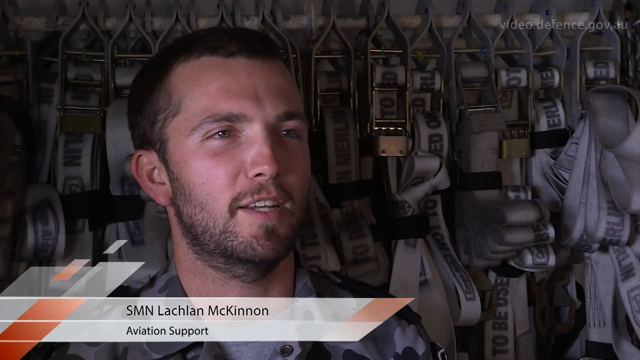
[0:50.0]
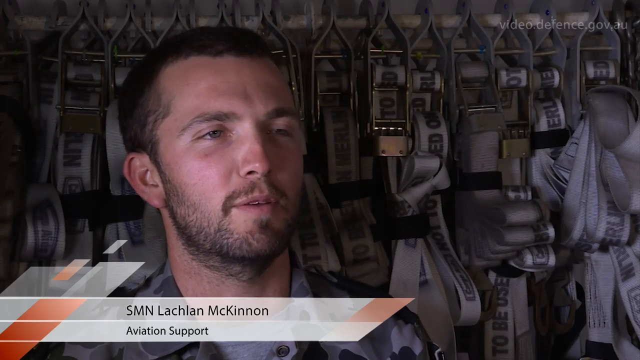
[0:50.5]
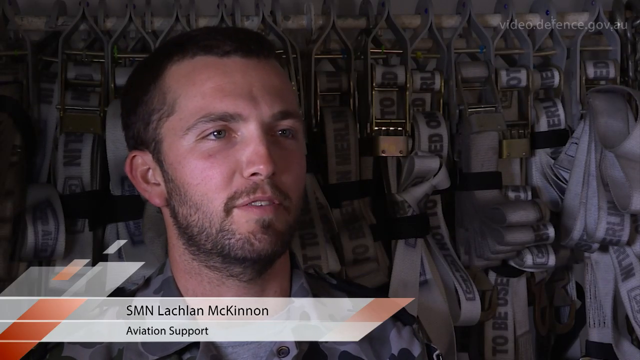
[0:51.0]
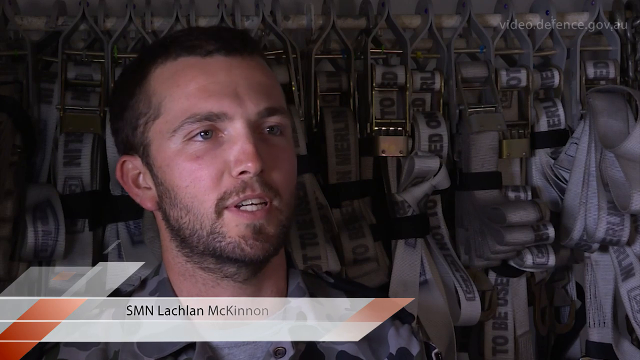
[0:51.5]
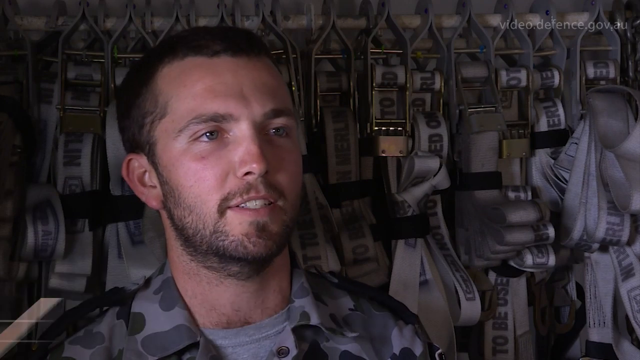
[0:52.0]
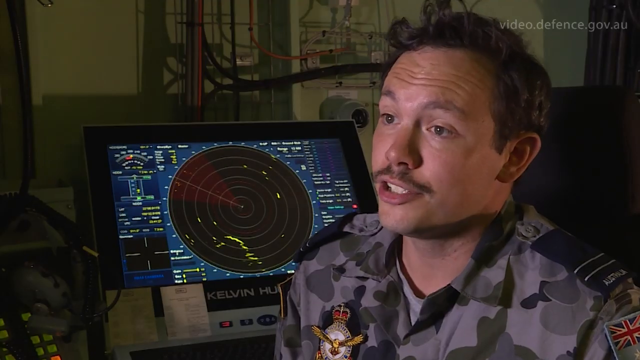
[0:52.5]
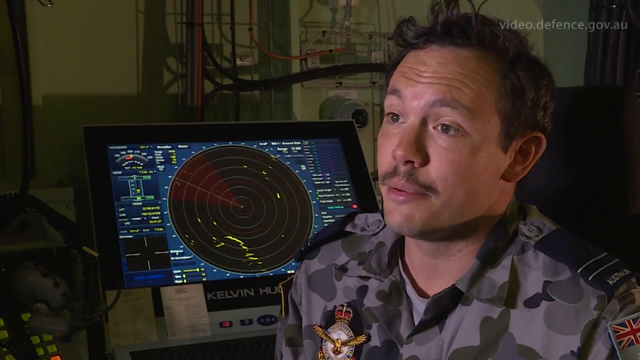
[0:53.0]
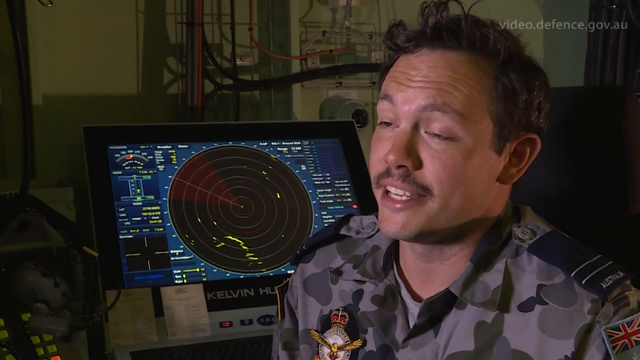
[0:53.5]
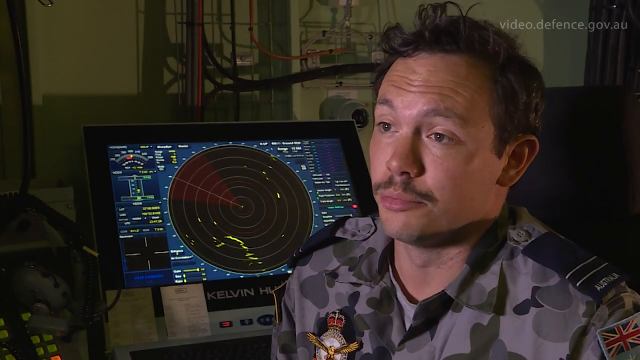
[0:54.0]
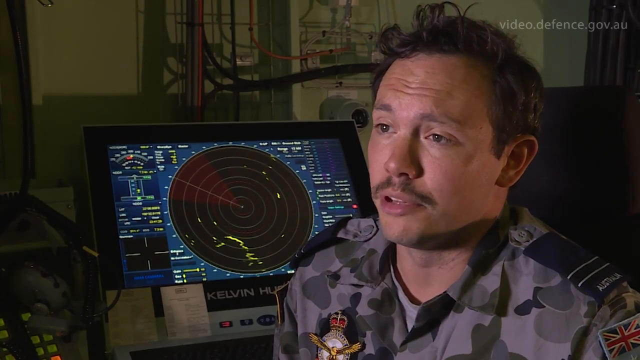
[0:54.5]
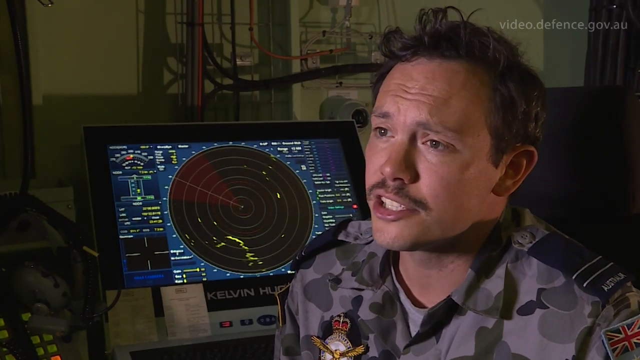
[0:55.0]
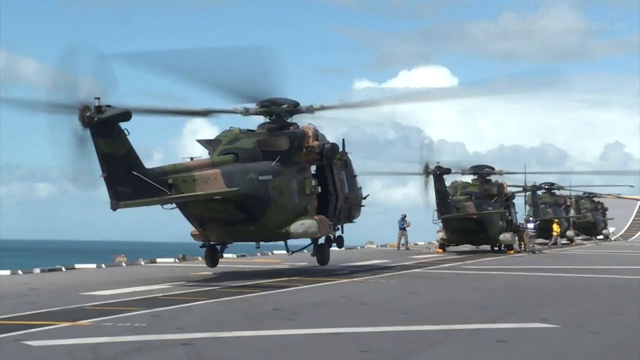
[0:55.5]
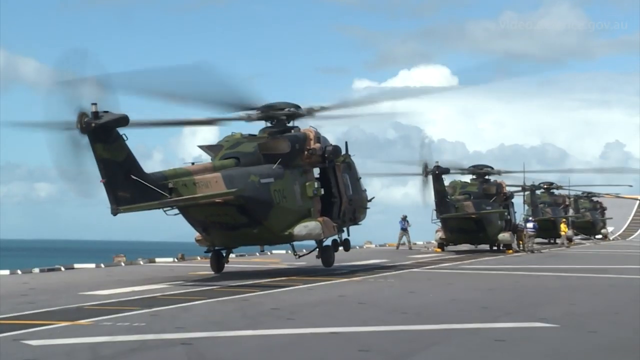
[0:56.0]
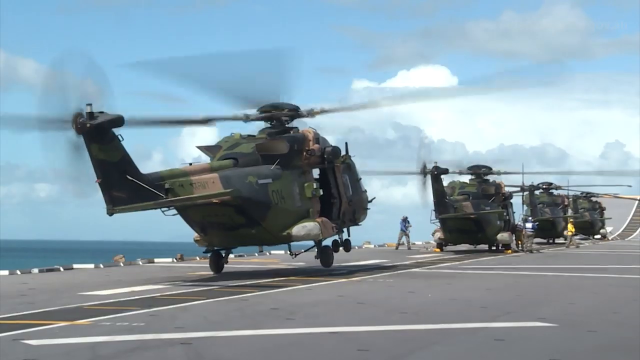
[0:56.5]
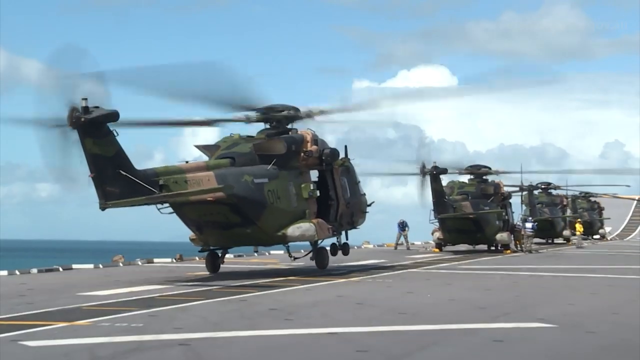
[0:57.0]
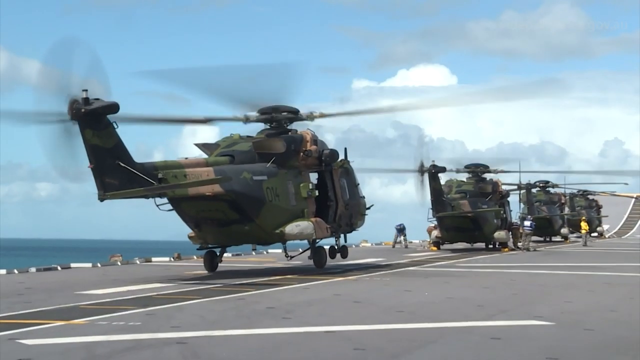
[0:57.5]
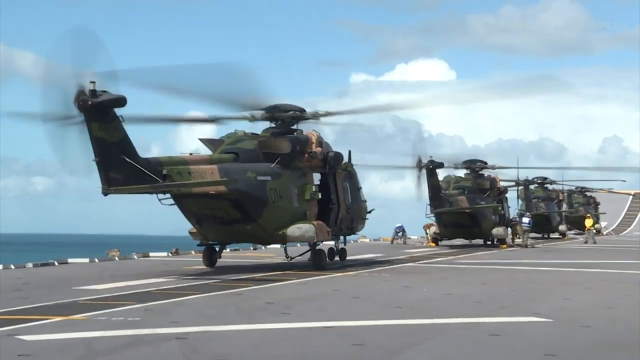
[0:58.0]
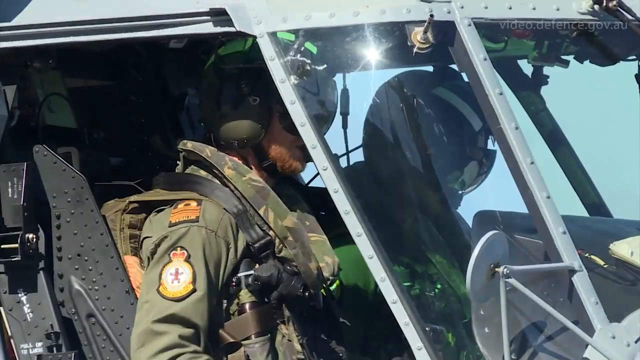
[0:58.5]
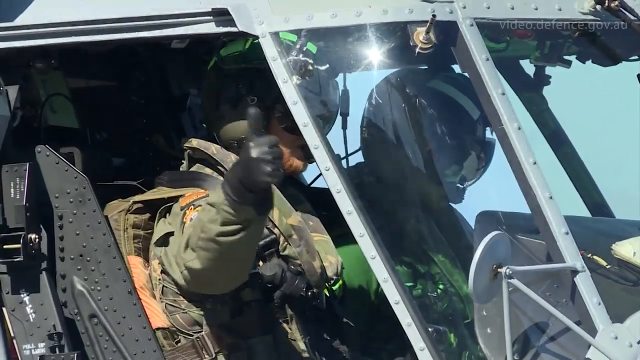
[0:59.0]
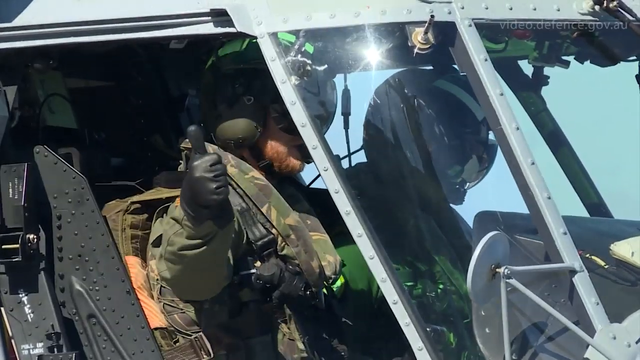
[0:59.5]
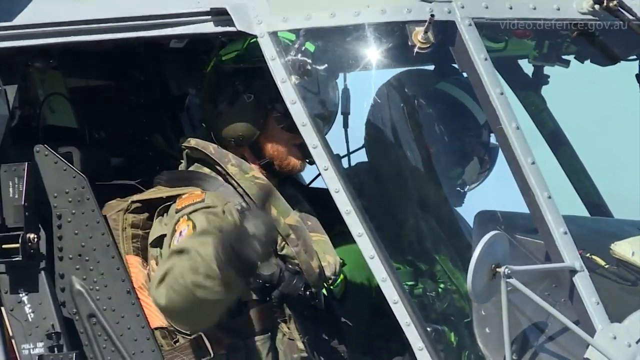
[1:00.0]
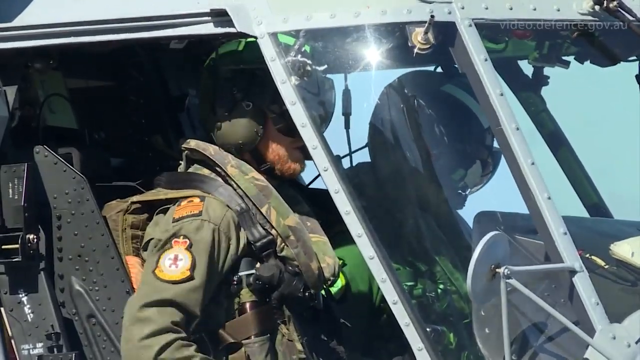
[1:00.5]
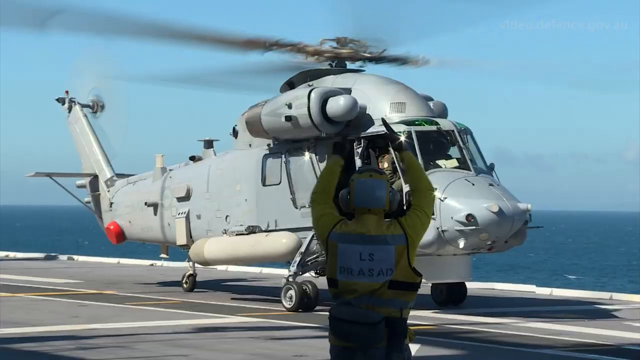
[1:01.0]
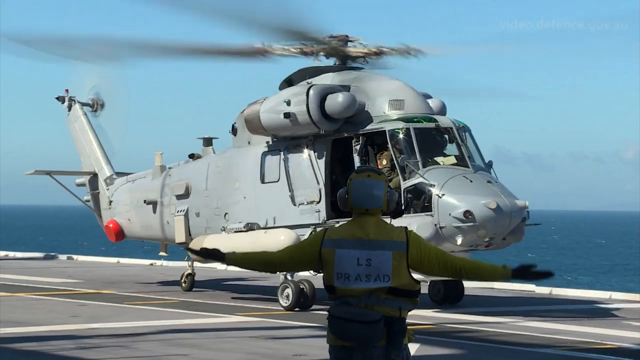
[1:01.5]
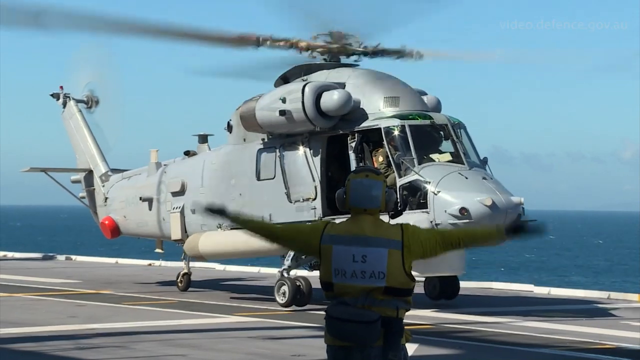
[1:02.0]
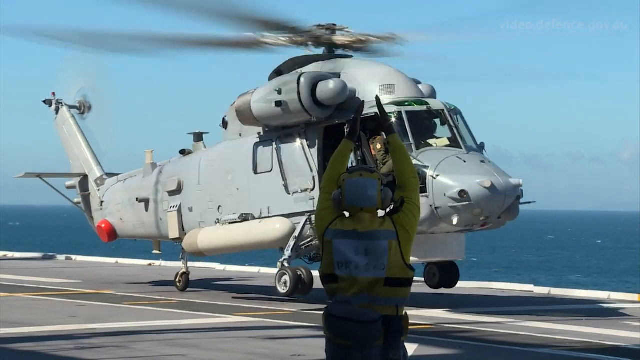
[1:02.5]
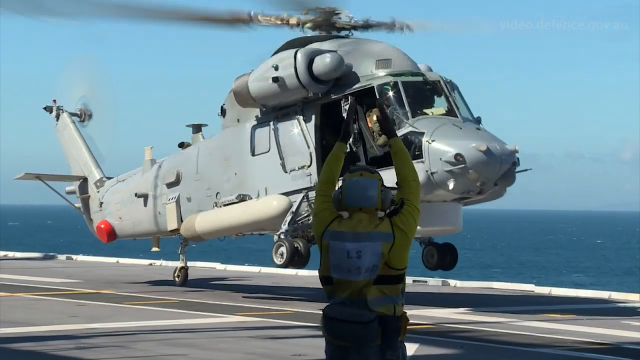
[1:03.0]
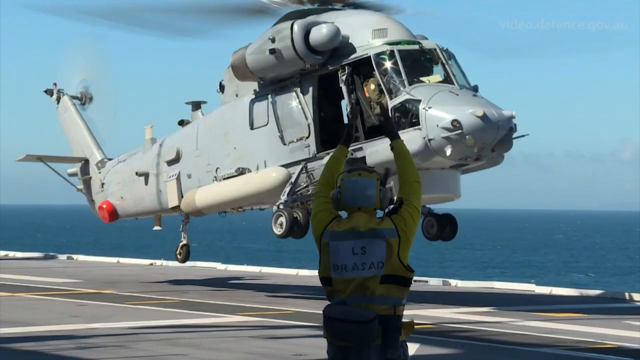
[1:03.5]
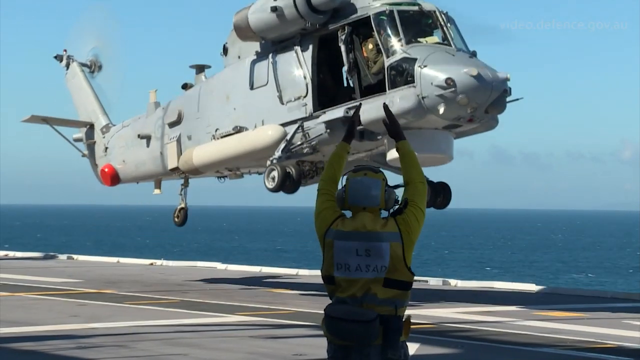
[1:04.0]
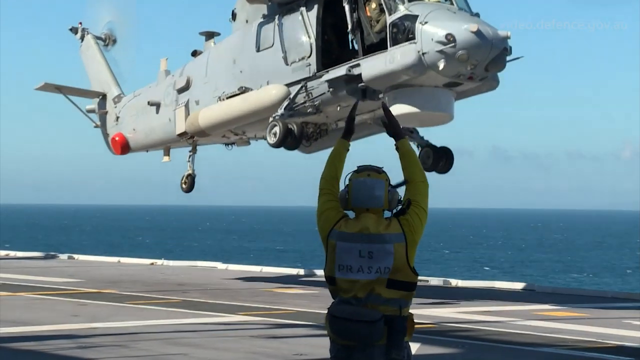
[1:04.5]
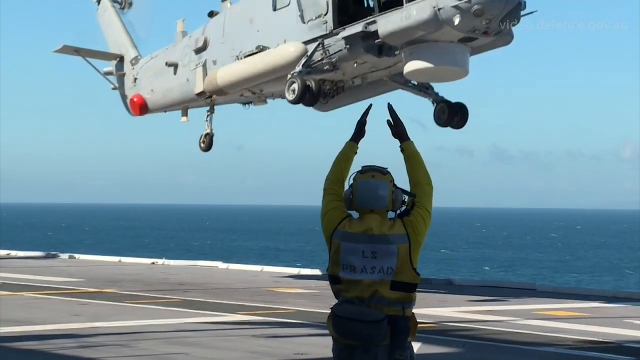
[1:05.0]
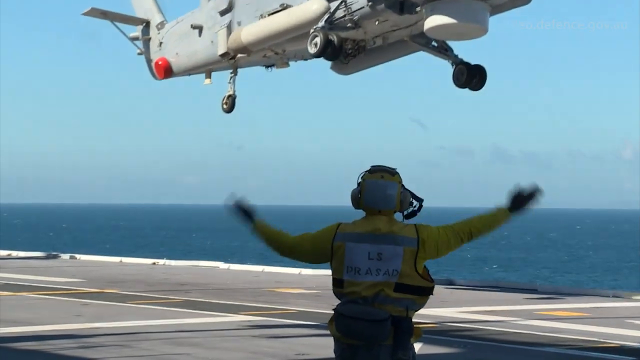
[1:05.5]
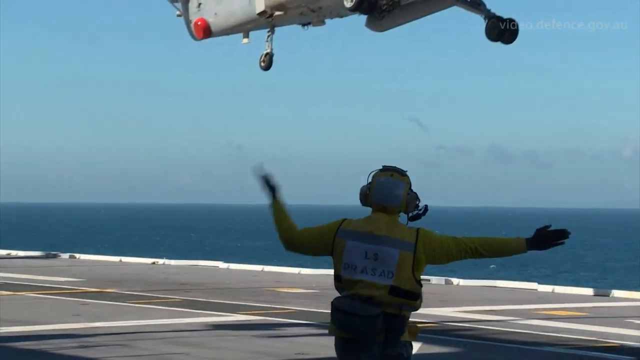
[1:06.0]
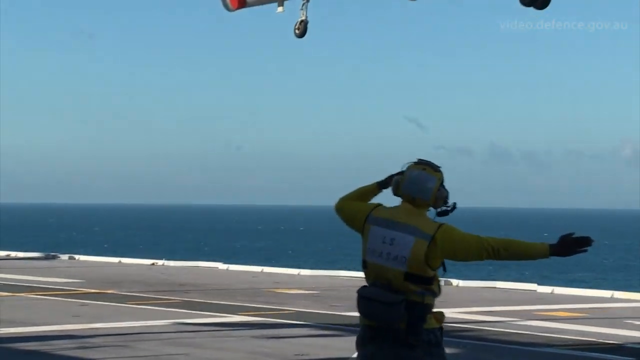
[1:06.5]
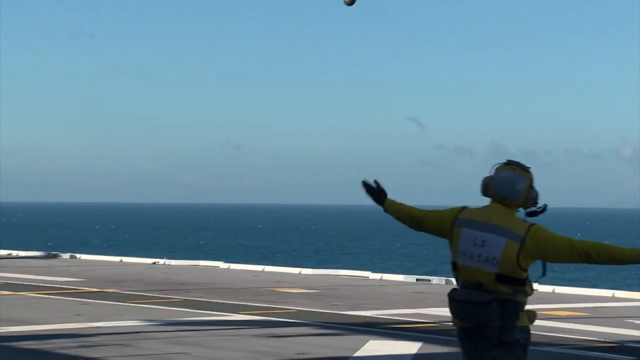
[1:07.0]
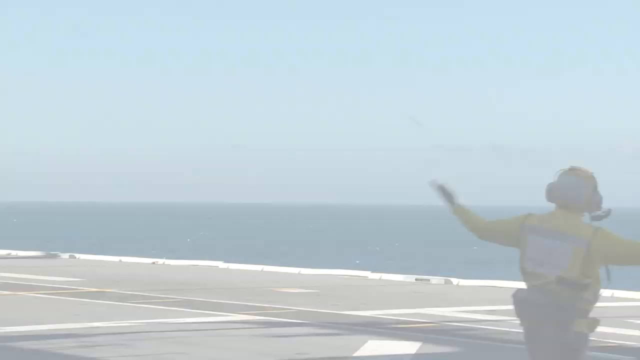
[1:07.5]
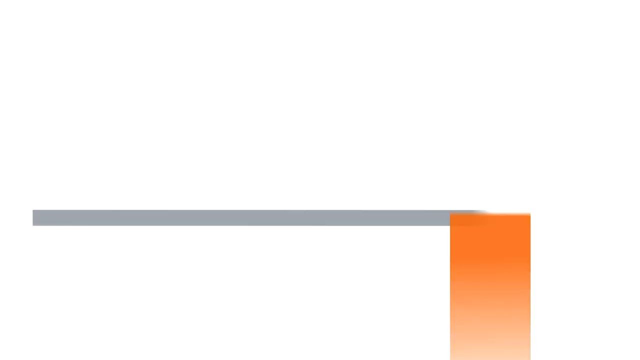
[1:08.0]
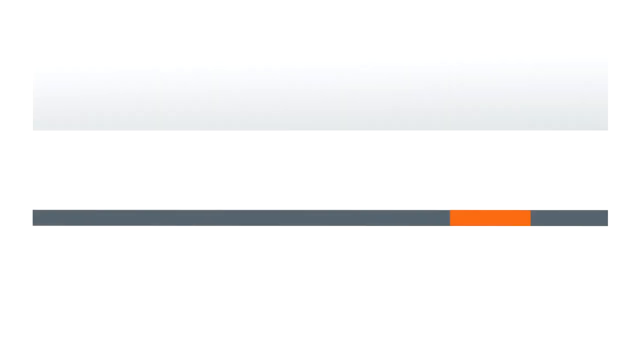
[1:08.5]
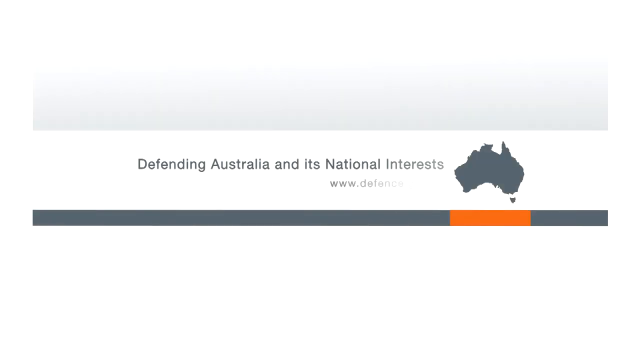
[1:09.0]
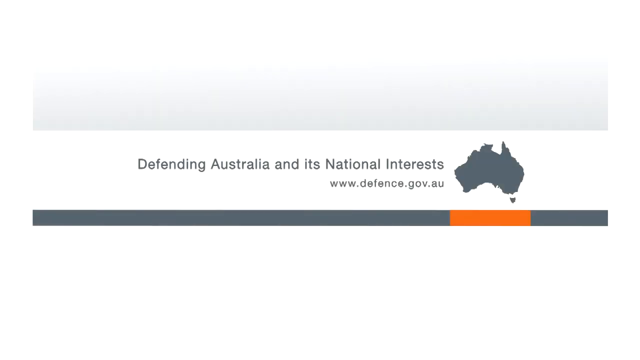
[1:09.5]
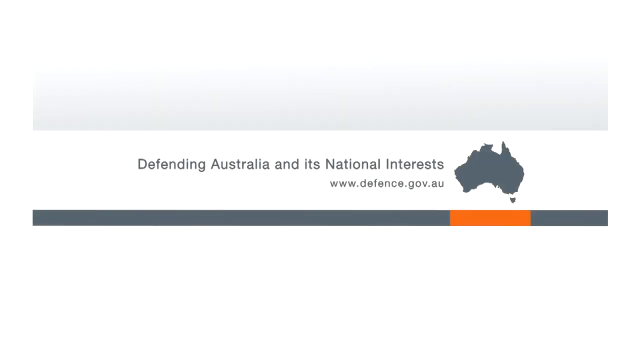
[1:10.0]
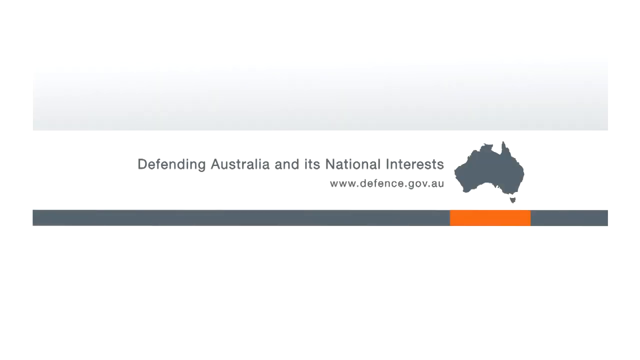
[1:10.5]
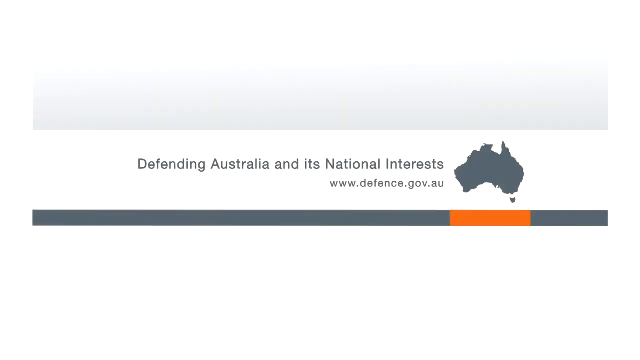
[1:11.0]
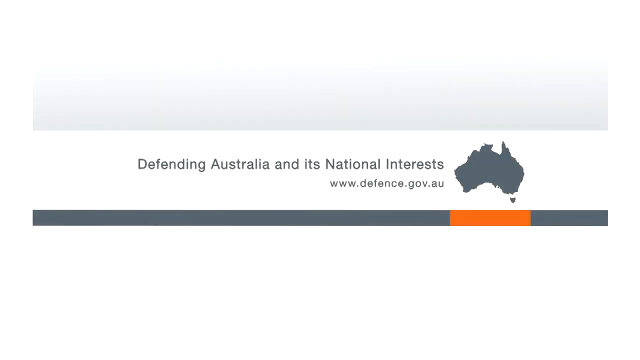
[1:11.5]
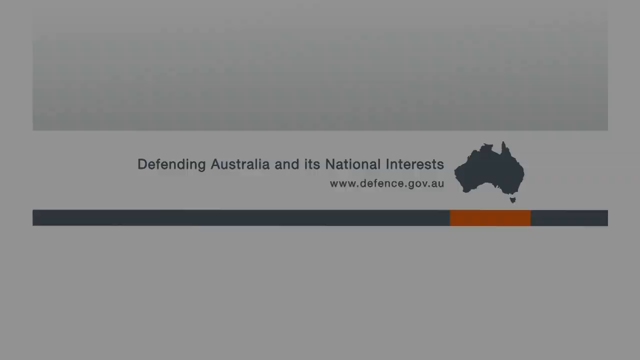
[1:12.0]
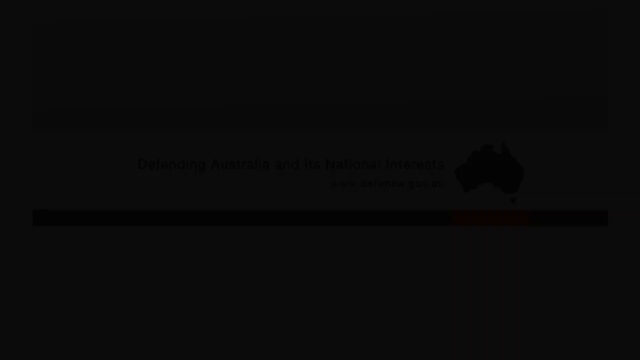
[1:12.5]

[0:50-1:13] A grey helicopter lands on a large ship deck under a bright blue sky, with a deep blue sea behind. Its long blades spin fast. A person wearing a yellow vest and a helmet is standing there and looks very small, and the sun makes the lettering on the helicopter shine. The video then changes to a background with words written in black. On the right side is a picture of an Australian map showing an orange and black shape. Above a line there is text on a white background, with the line running under the words; the image looks simple, almost like a logo. Then a man with a light complexion sits leaning on a chair and speaks directly to the camera, seemingly answering questions as in an interview.